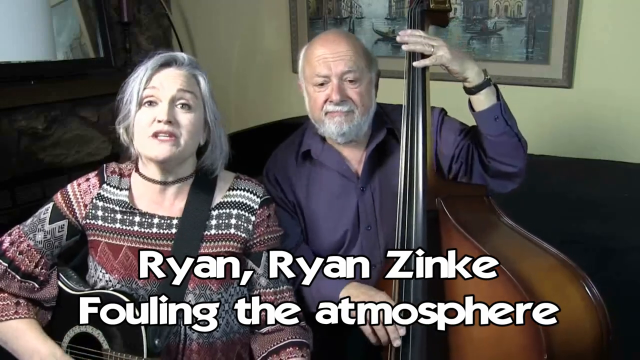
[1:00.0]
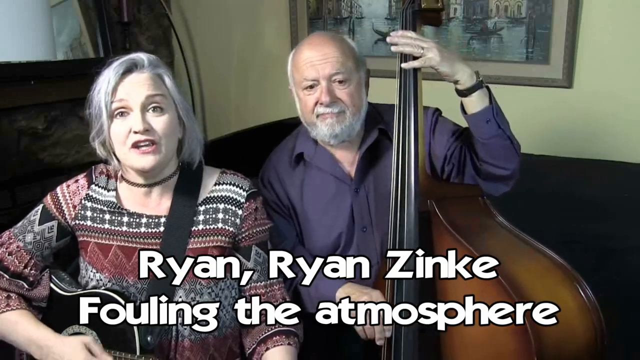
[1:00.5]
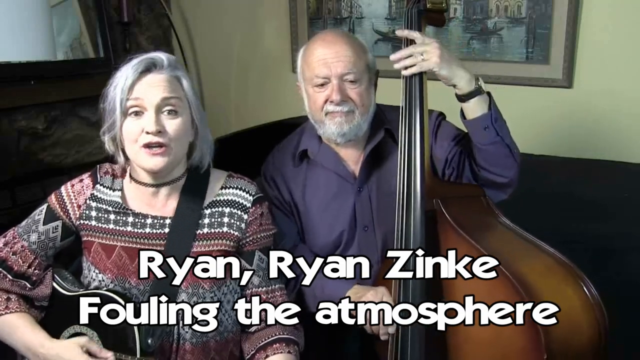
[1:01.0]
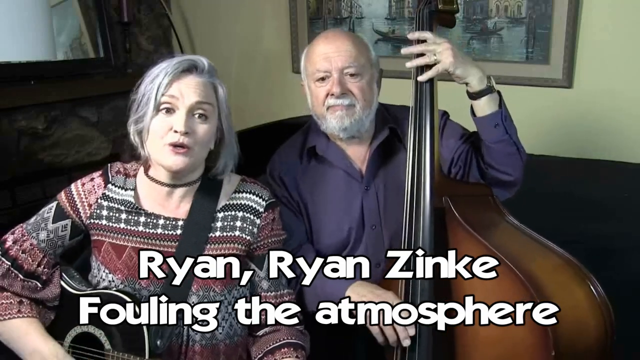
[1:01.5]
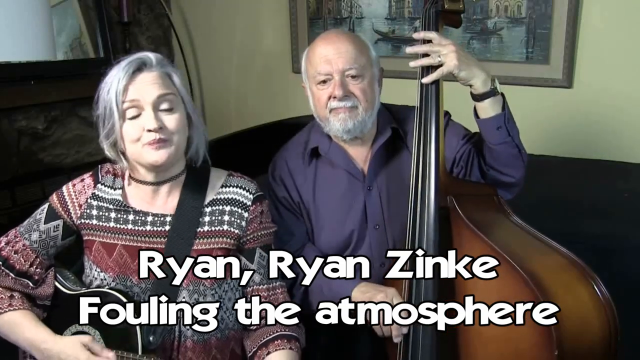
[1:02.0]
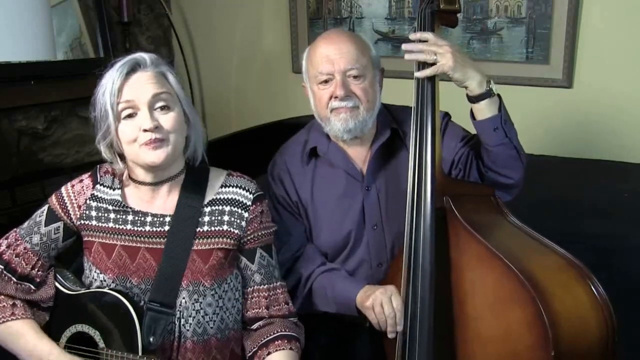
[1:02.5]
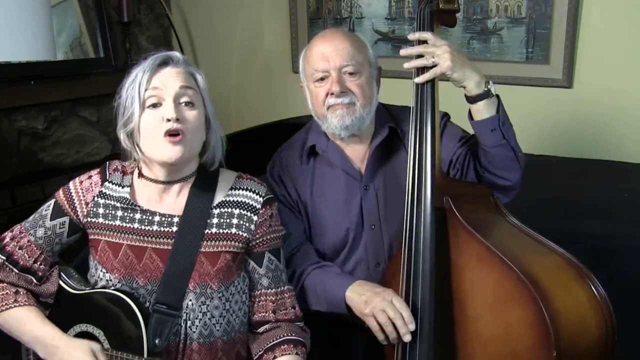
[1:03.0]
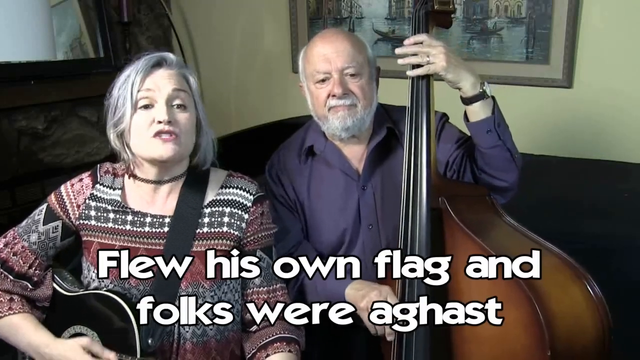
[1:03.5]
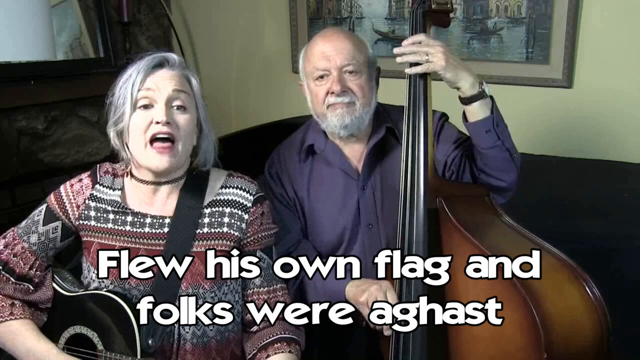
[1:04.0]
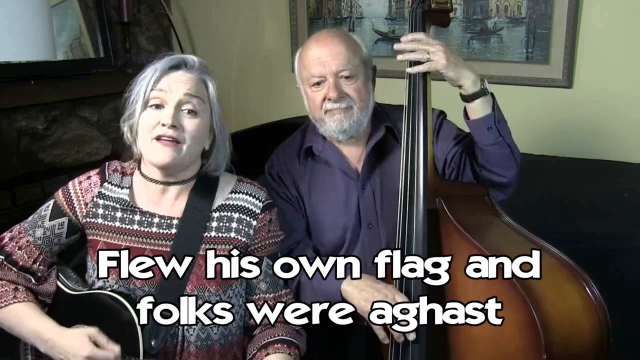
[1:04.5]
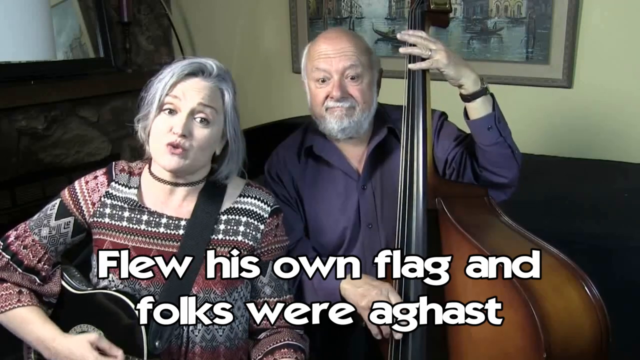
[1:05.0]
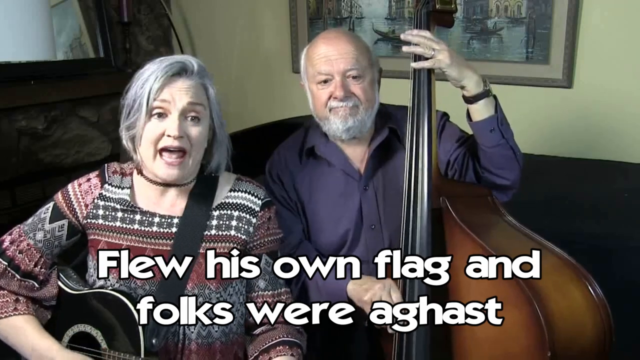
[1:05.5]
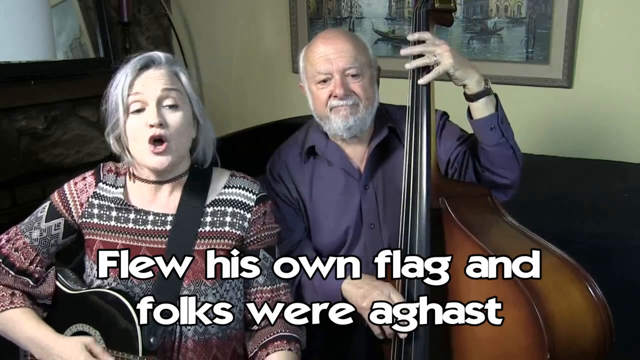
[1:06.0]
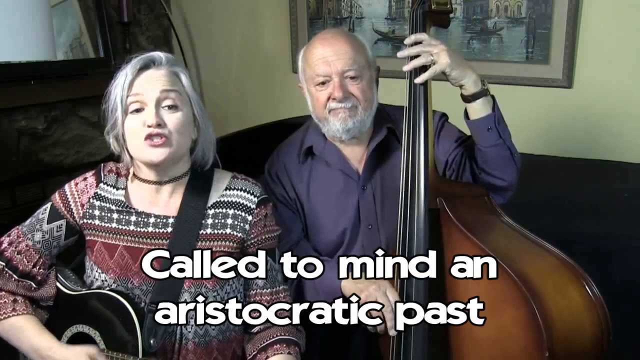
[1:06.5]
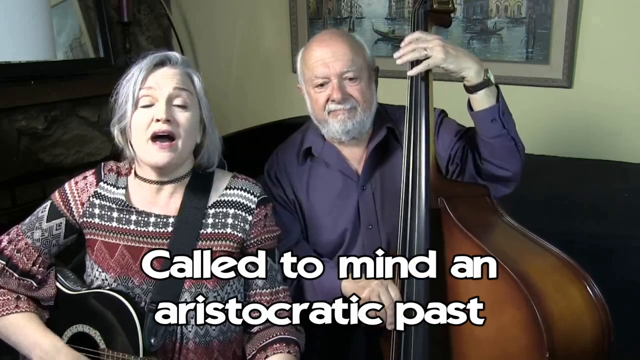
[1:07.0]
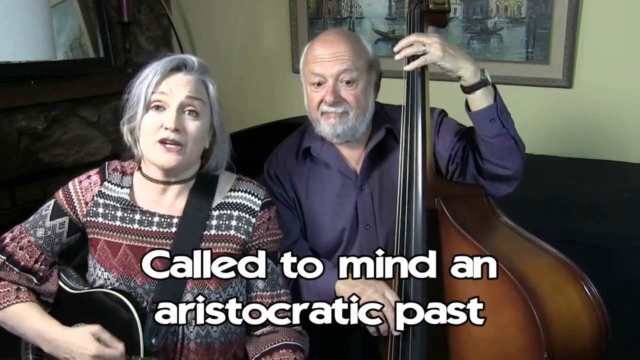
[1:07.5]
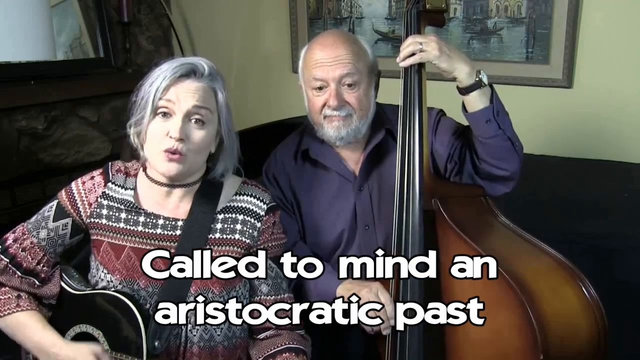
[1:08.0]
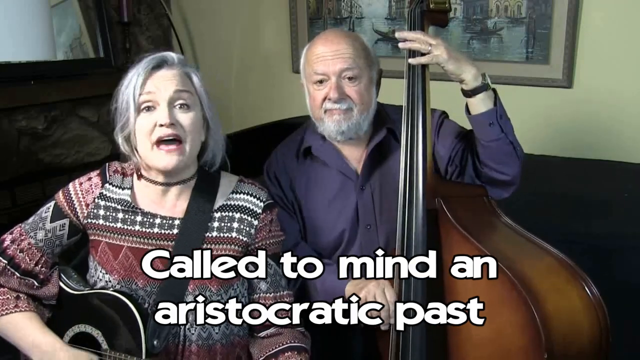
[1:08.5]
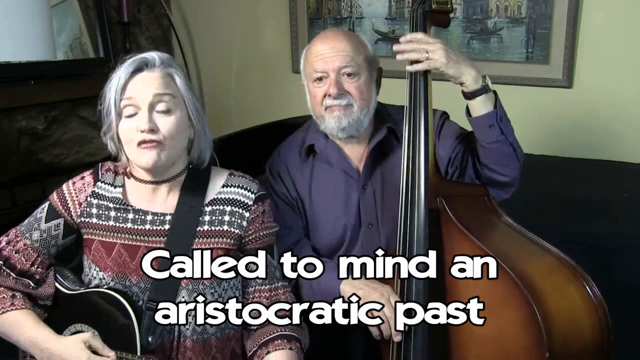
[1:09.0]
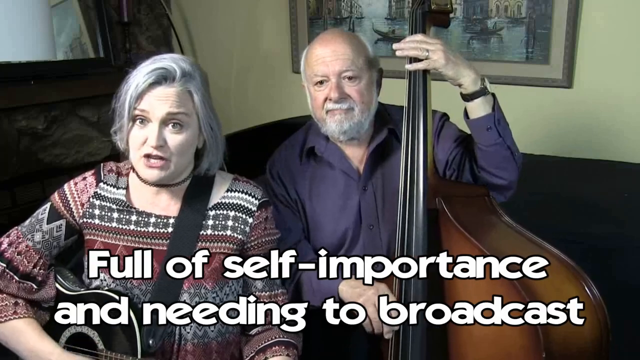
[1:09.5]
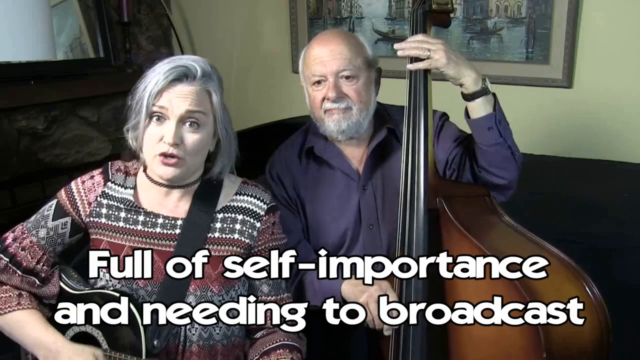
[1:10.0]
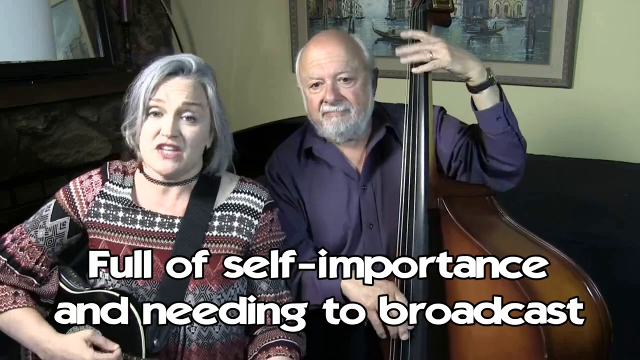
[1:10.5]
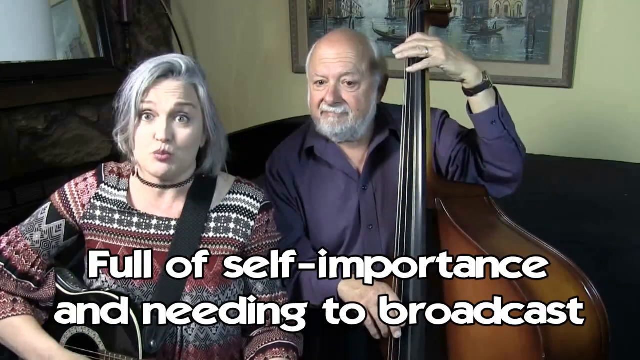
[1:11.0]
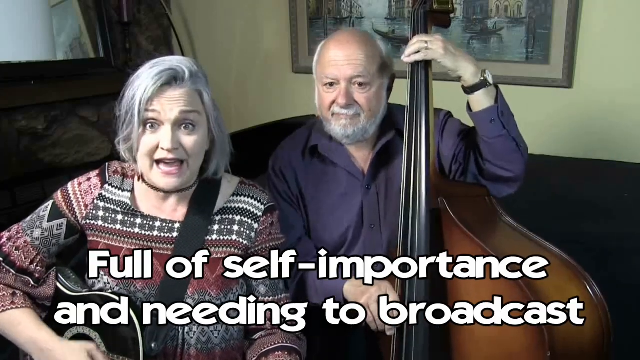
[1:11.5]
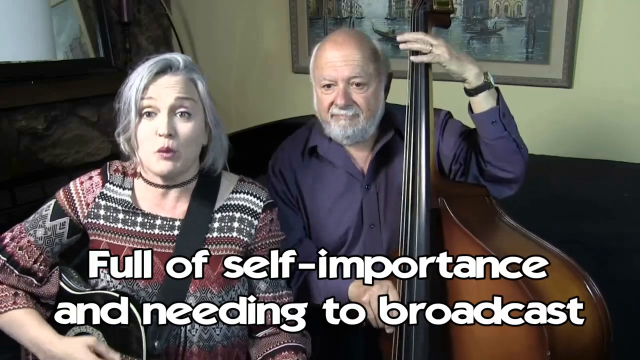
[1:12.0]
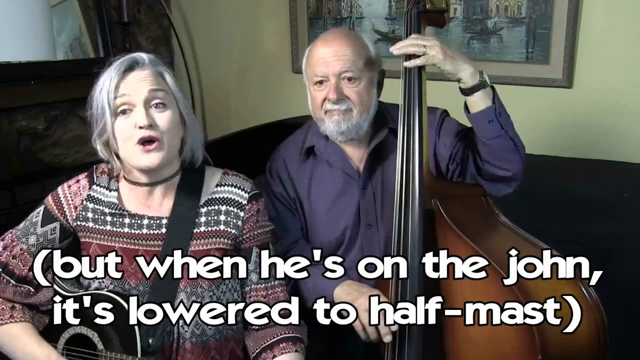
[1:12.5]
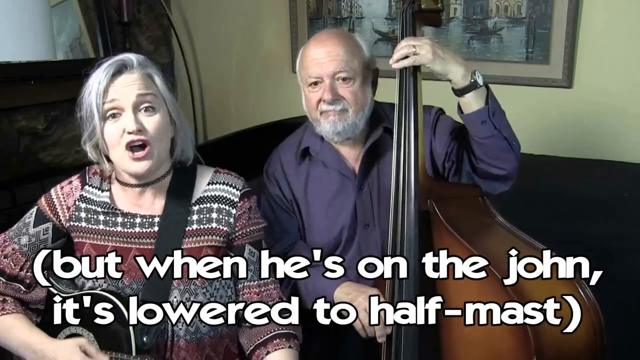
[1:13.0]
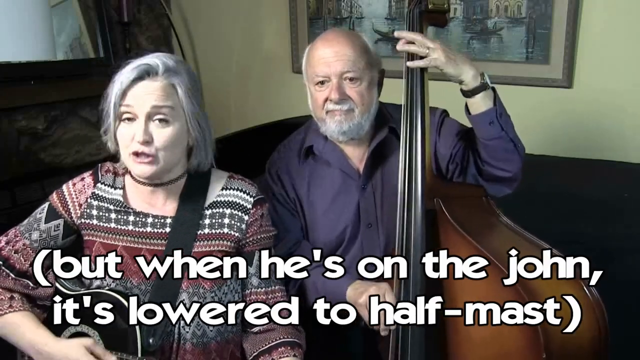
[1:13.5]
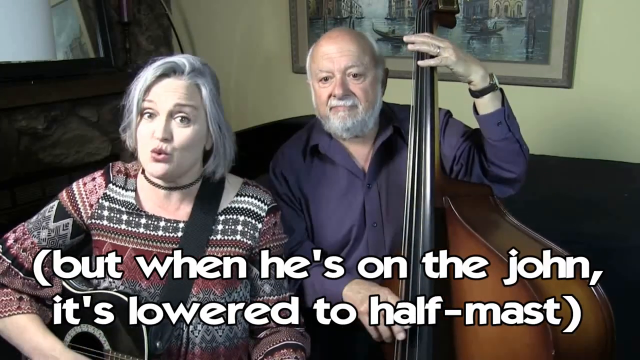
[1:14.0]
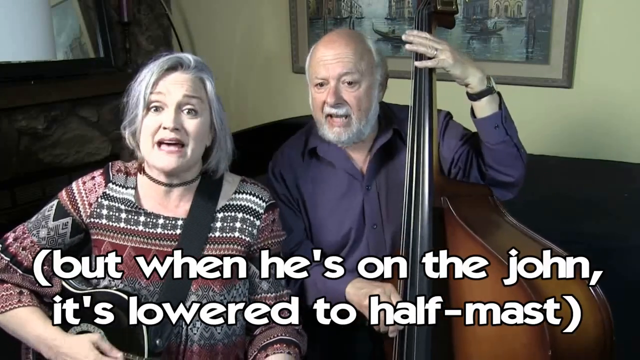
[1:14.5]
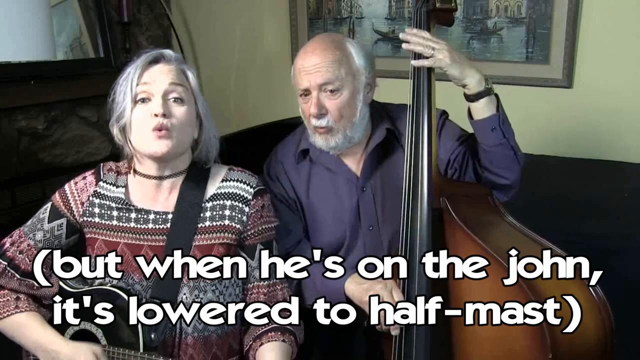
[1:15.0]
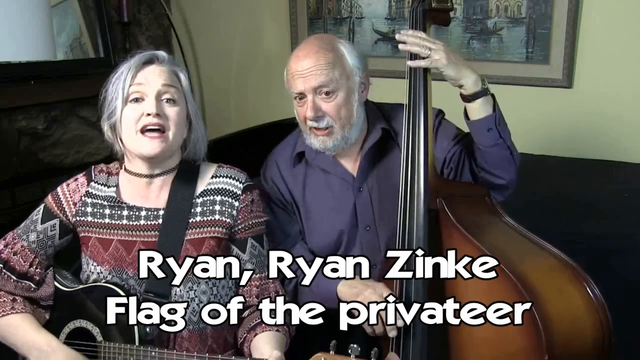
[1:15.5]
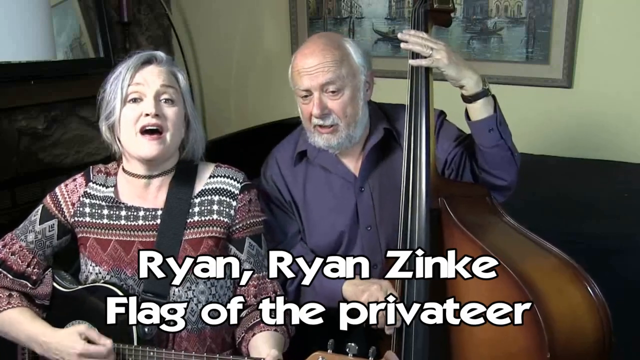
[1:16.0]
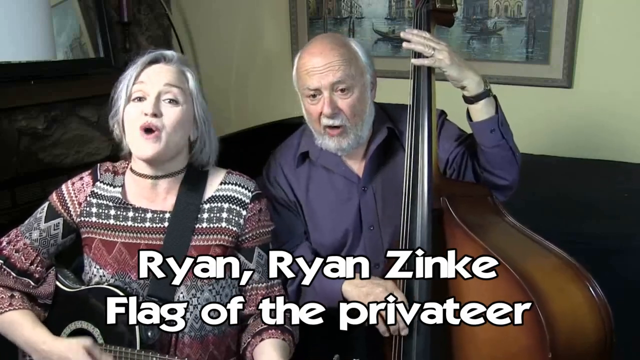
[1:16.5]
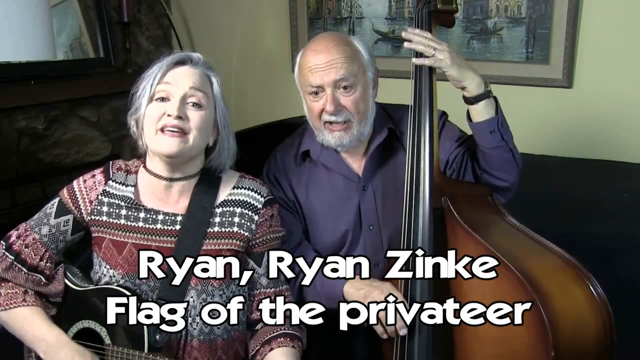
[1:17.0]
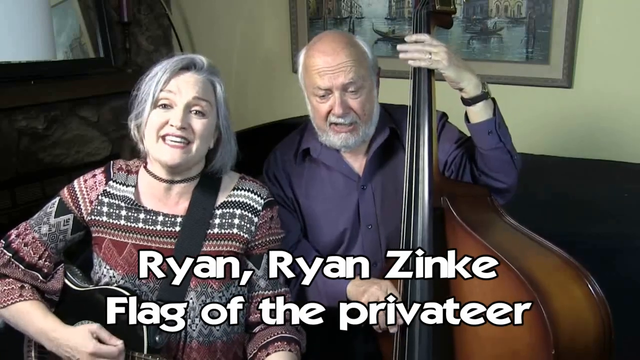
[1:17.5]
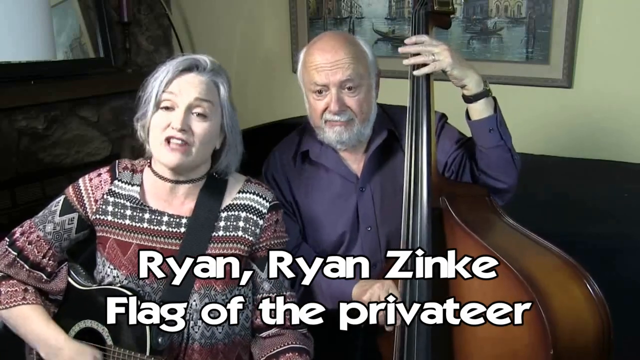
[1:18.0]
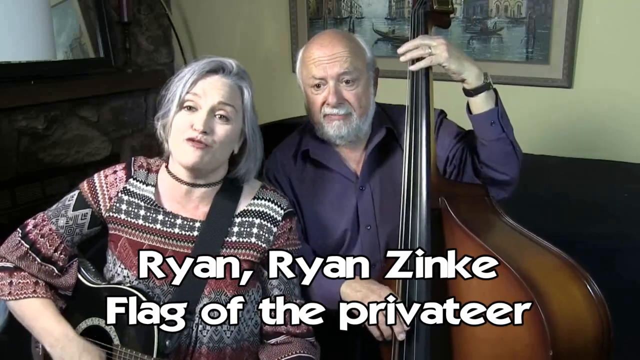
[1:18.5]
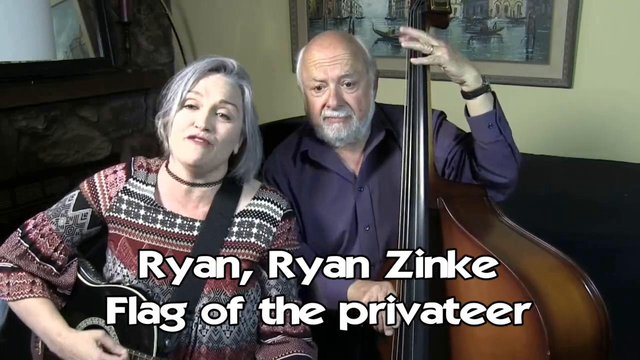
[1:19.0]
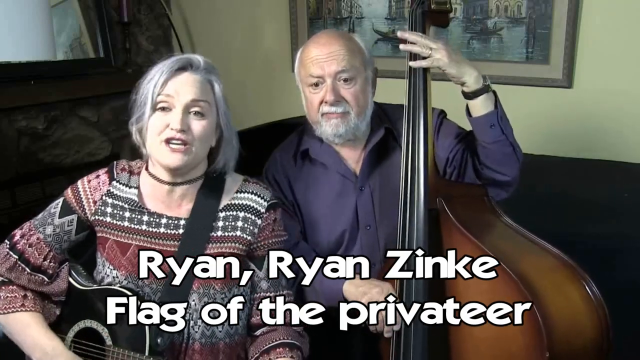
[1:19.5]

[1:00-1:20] The woman and the man are still singing the political song, both sitting on the couch. The subtitles read "flew his own flag and called to mind an aristocrat past, full of self-importance and needing to broadcast", followed by a line in parentheses, and later "flag of the privateer". The man is still playing the stand-up bass, and the woman is still playing a black guitar. The setting is the same: a cream teal wall with the picture hanging, and a window to the left. The couch is black. The man still wears his purple or lavender button-down shirt, and he has no hair. The woman still wears the multicolored New Mexico/Albuquerque-style shirt with a black necklace, and she has silver hair. The subtitles are white, at the bottom of the video.